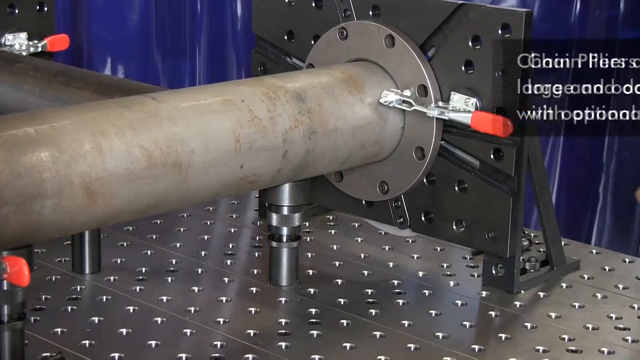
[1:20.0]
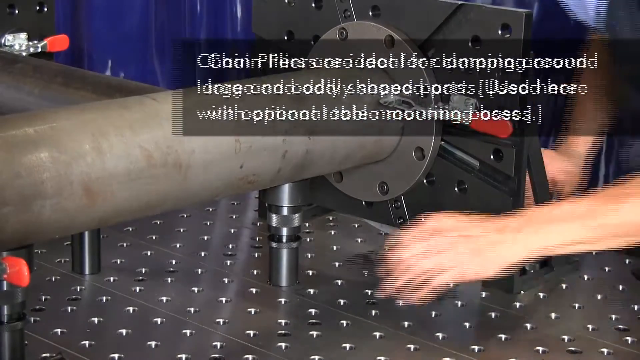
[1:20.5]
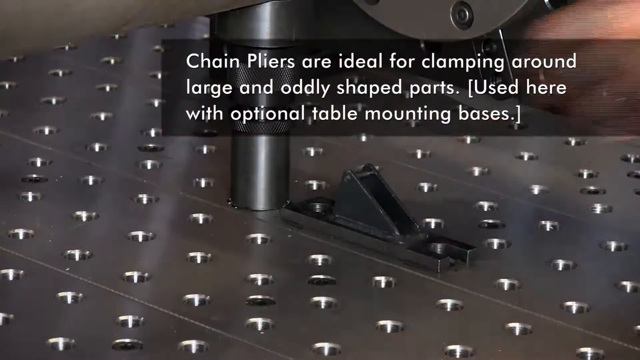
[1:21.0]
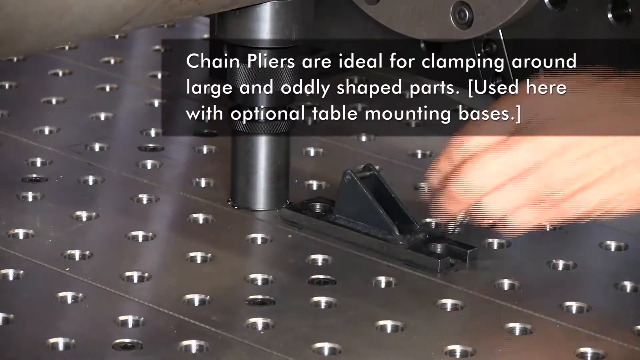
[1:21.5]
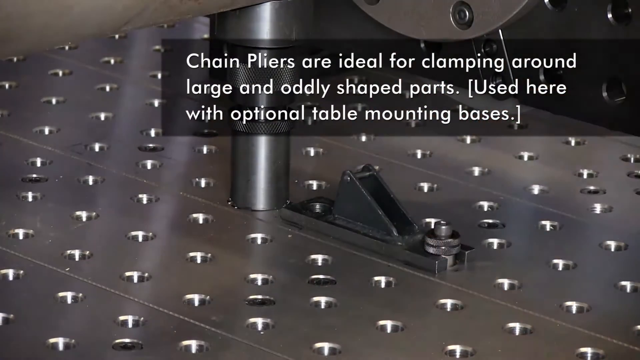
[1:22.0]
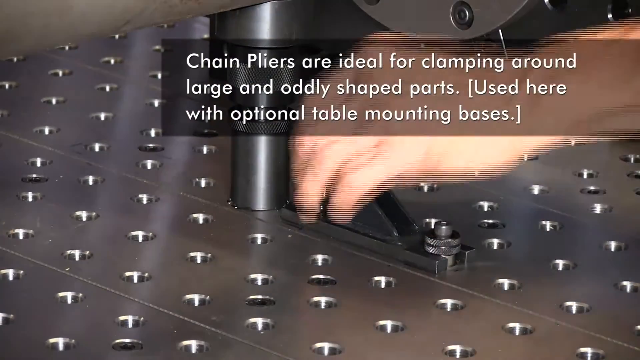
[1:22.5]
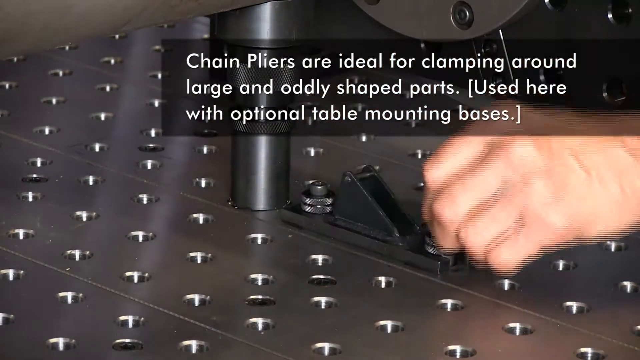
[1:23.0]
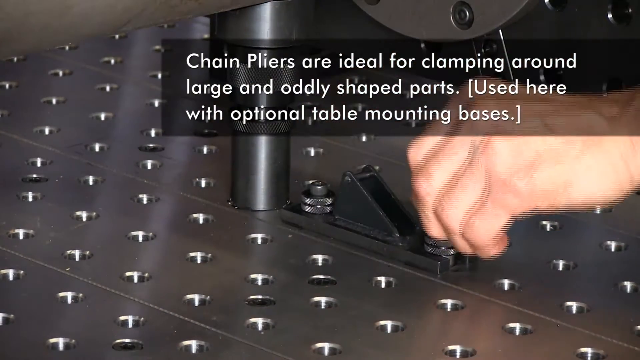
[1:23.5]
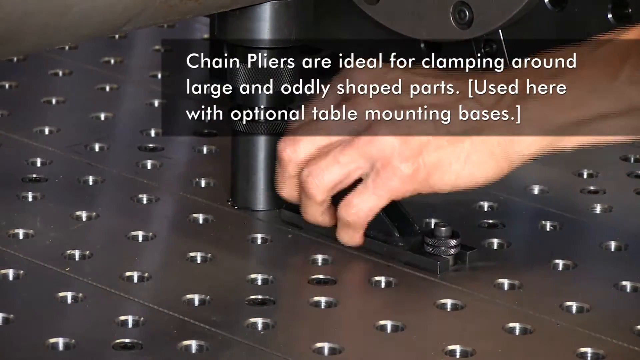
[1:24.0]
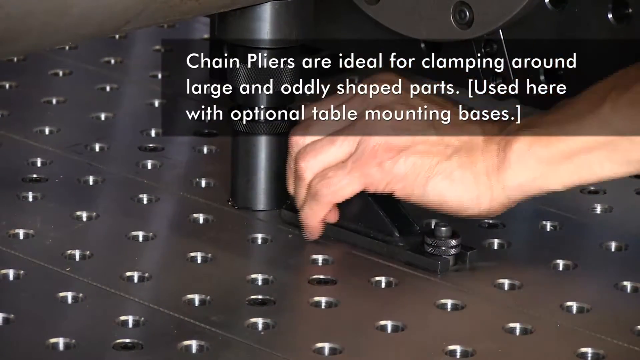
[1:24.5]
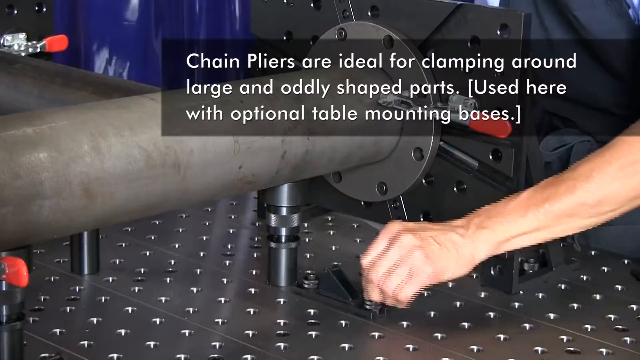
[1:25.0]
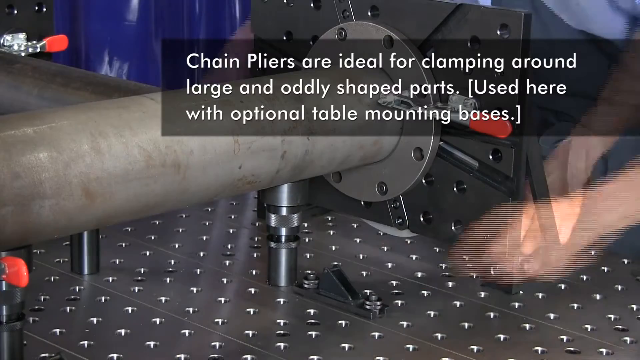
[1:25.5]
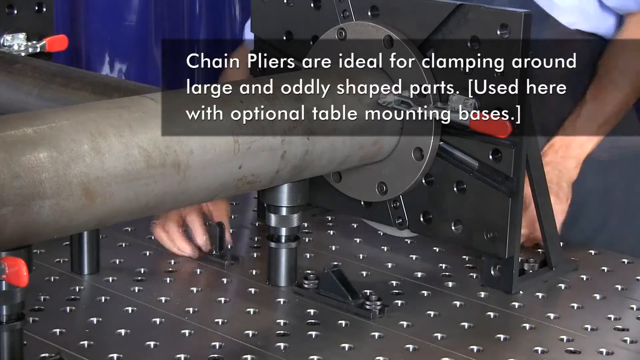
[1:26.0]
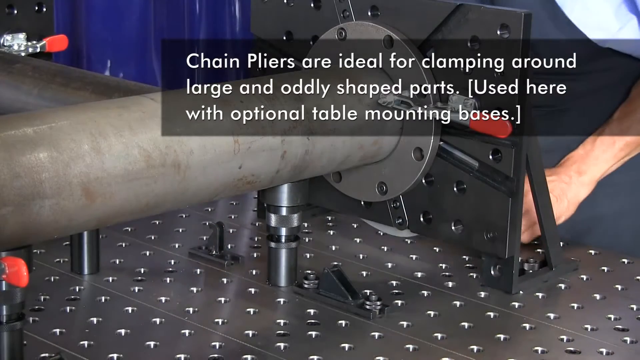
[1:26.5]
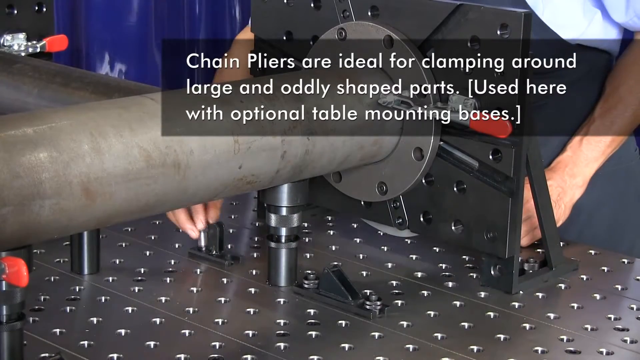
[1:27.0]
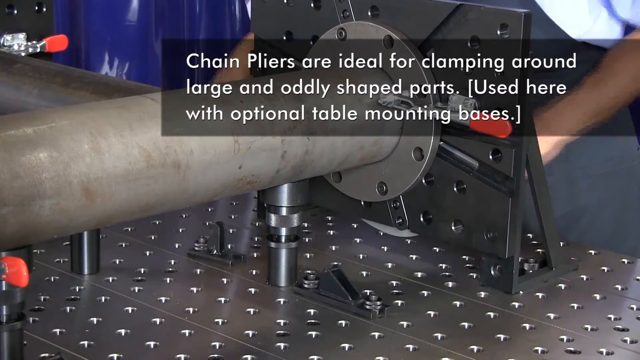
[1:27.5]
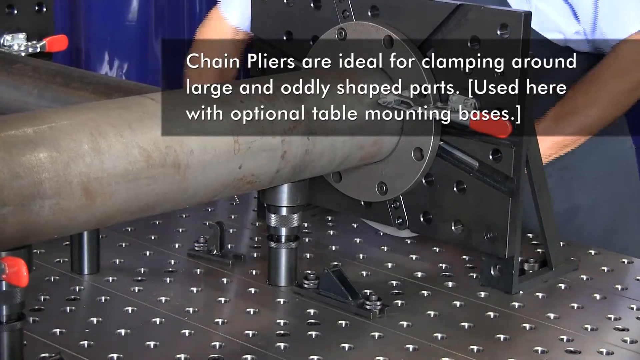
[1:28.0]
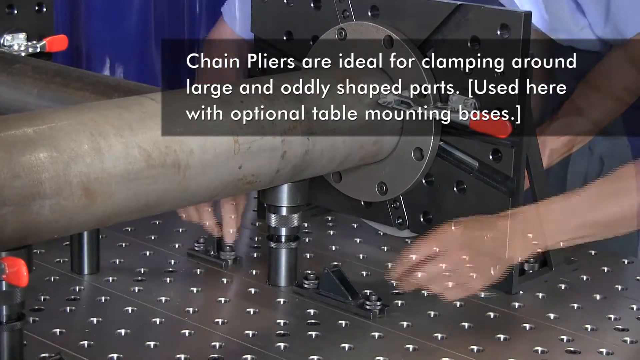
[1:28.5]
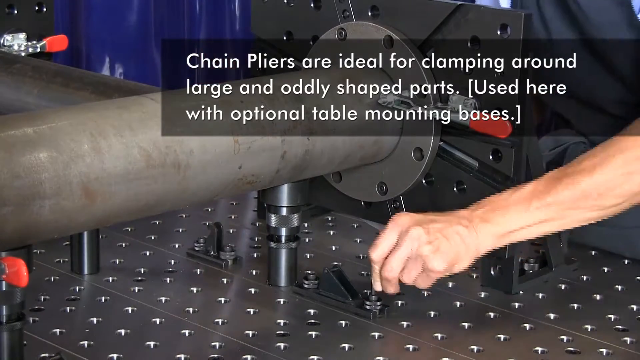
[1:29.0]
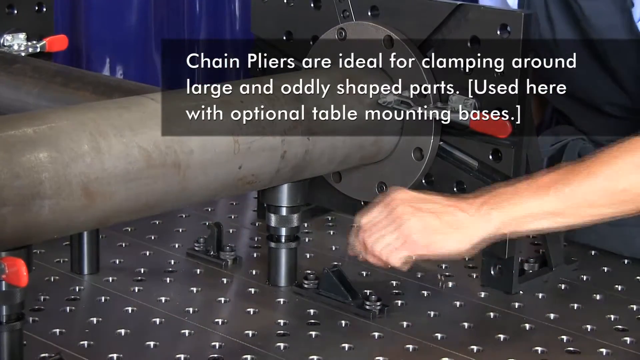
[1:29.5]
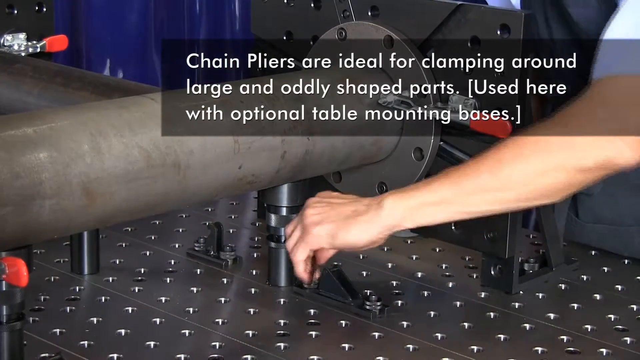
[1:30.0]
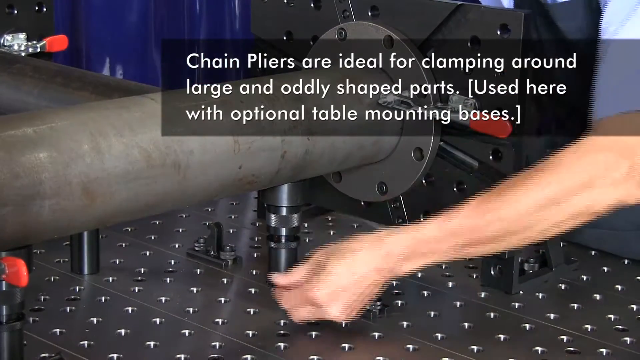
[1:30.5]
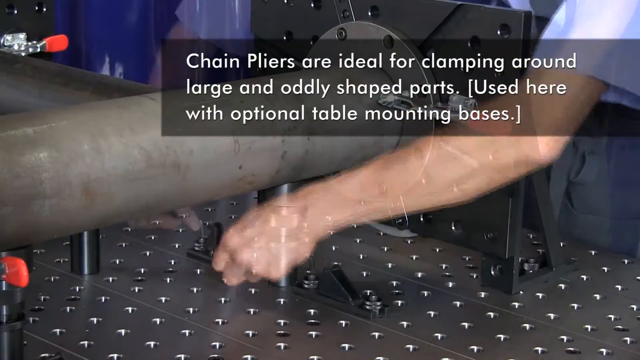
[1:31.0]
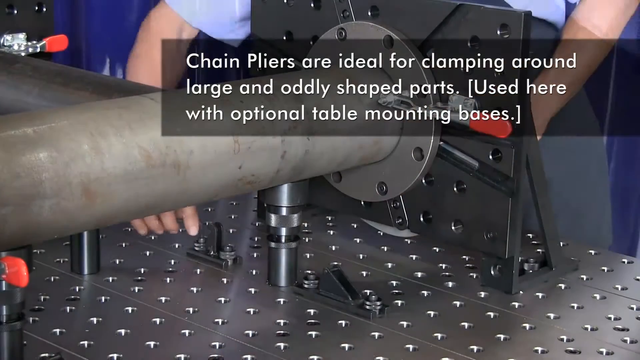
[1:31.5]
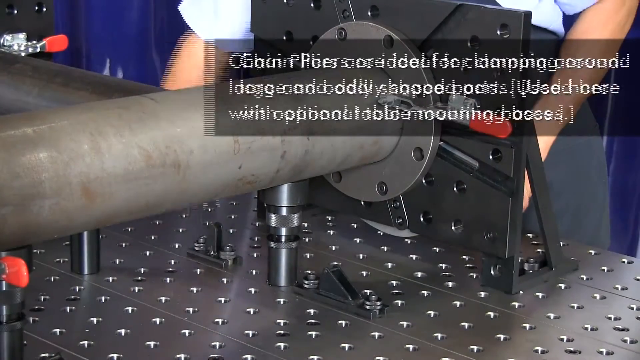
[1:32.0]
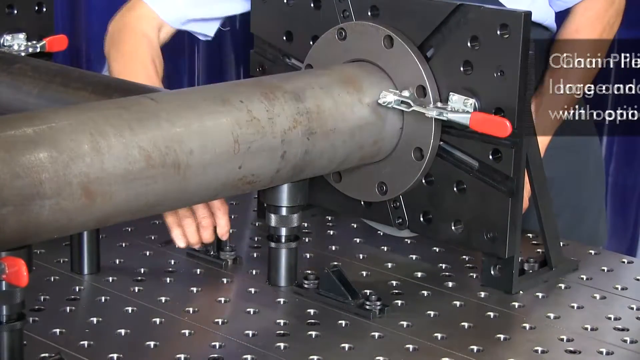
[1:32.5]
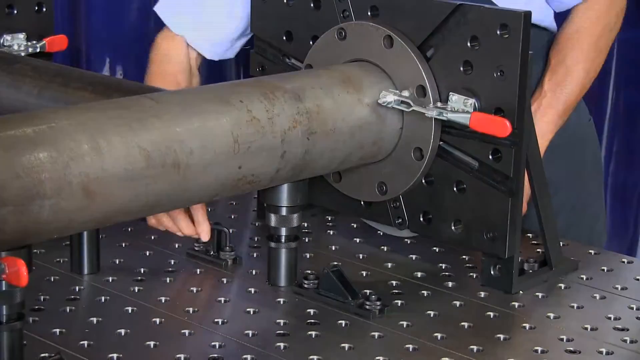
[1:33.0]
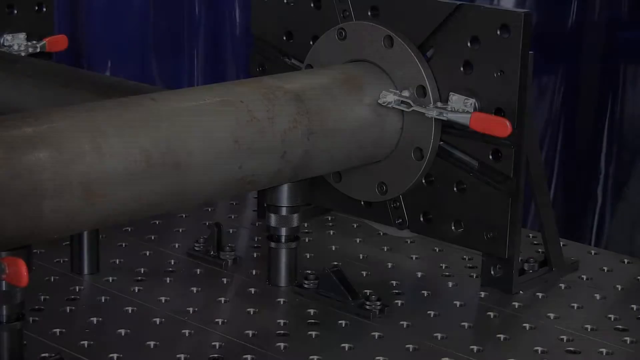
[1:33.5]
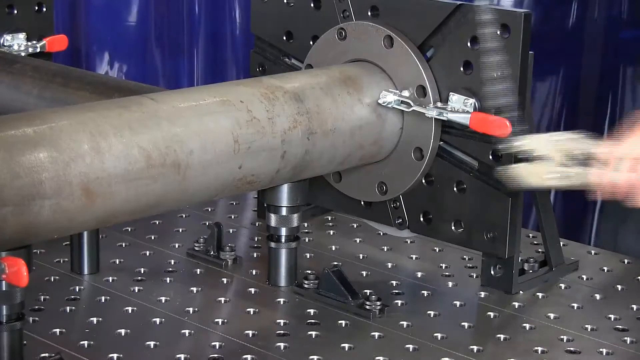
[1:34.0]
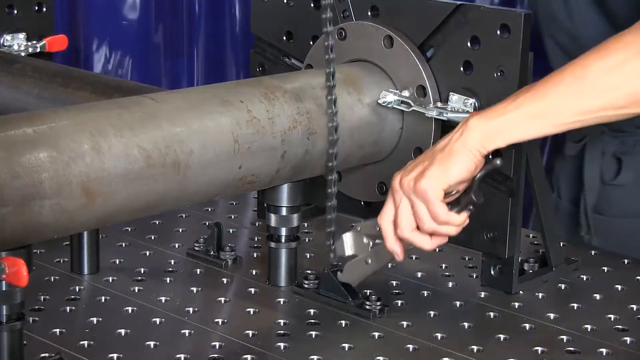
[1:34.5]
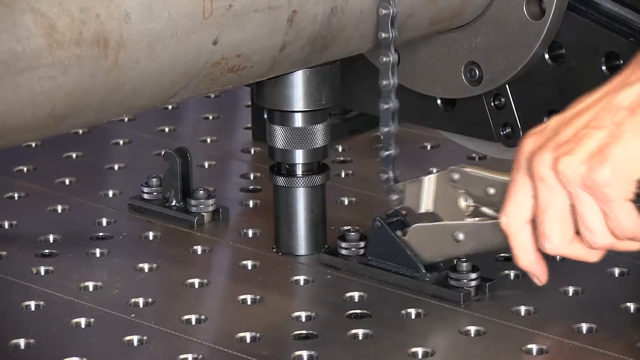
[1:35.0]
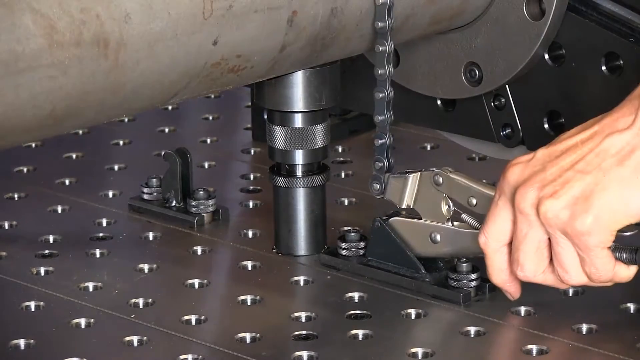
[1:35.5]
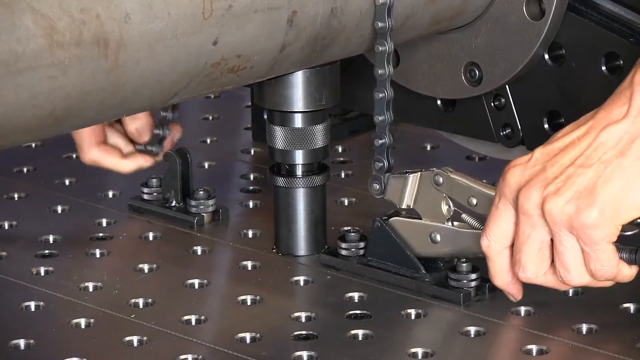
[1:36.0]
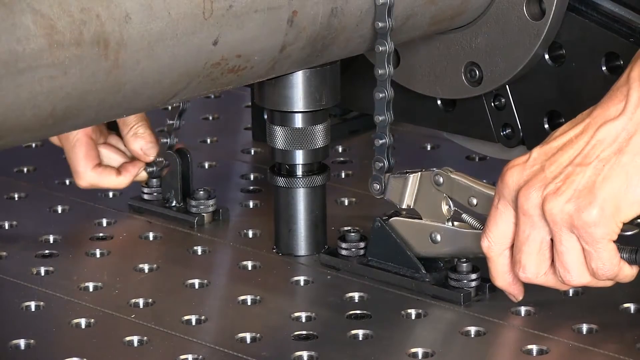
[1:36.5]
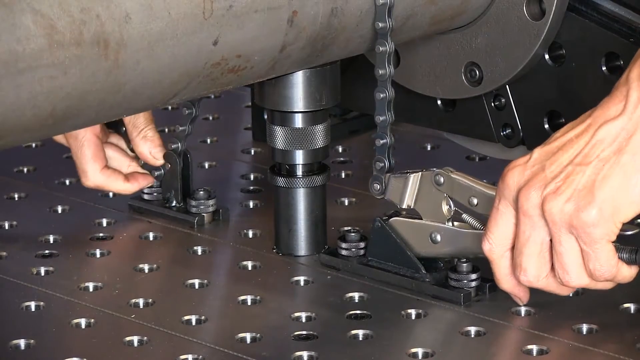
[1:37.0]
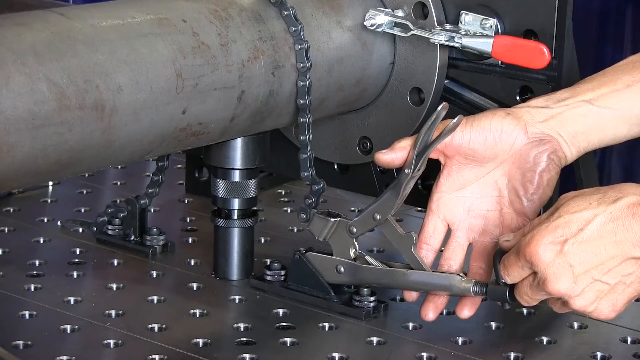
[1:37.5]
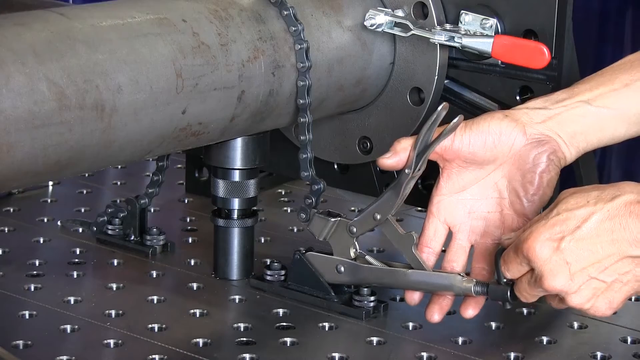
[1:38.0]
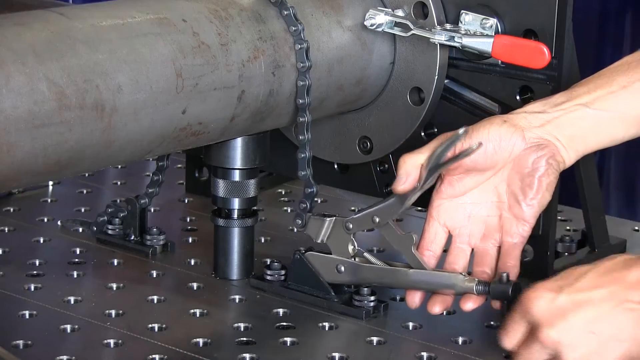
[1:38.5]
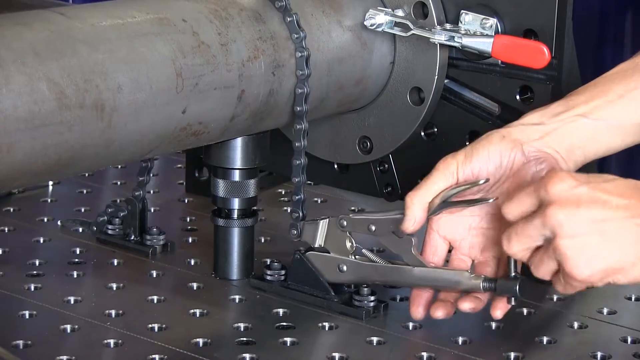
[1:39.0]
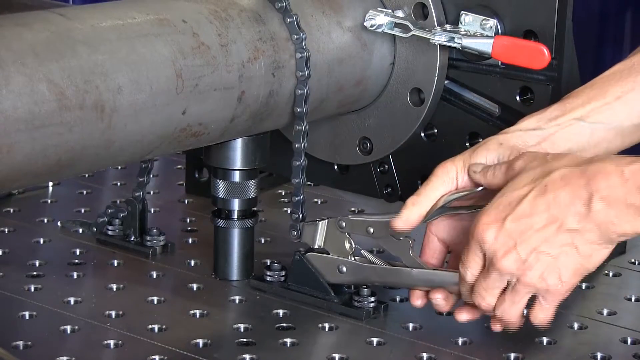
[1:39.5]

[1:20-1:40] Text reads "chain pliers are ideal for clamping around large and oddly shaped parts used here with optional table mounting bases." The person, who now appears to be male, puts lug nuts on the supports holding the pipes and the round end together and adjusts everything with an Allen wrench. They then take a wrench and add a chain to it, clamping down on what seems to be a wrench or clamper, which makes everything tight. The chain is around the original silver pipe and is attached to pieces of steel secured to the table. The person squeezes it ever so slowly with the right hand to make everything tight. The steel supports have many nuts tightened with the Allen wrench. The pipes are securely together, and the person steps back.